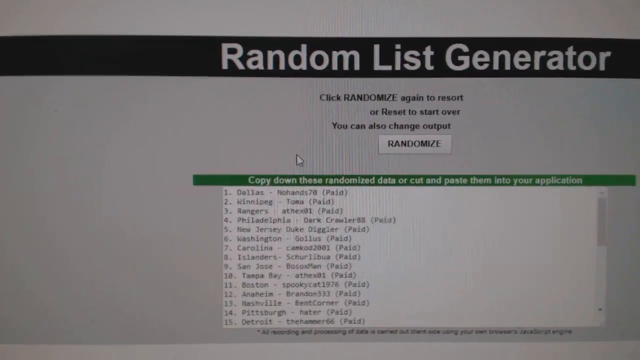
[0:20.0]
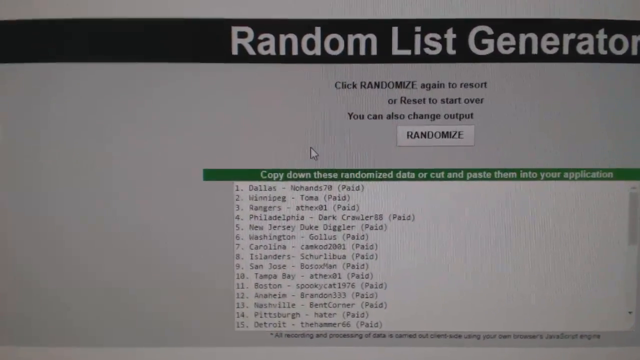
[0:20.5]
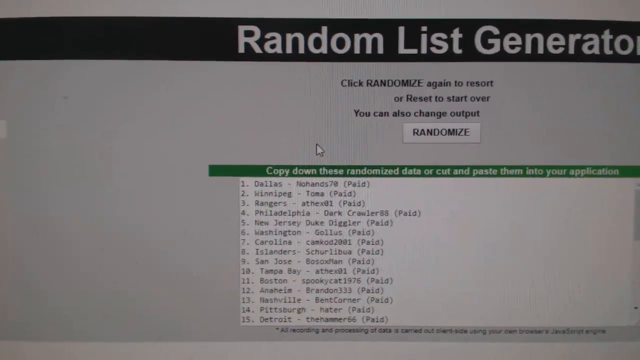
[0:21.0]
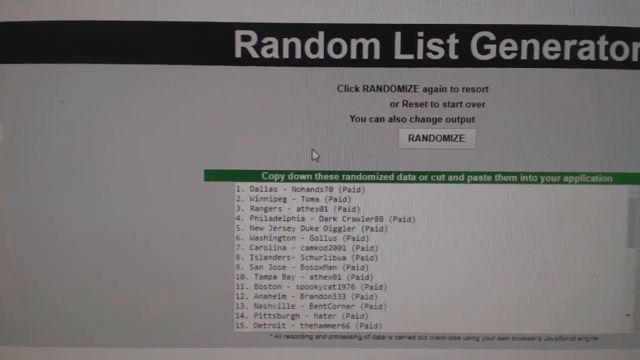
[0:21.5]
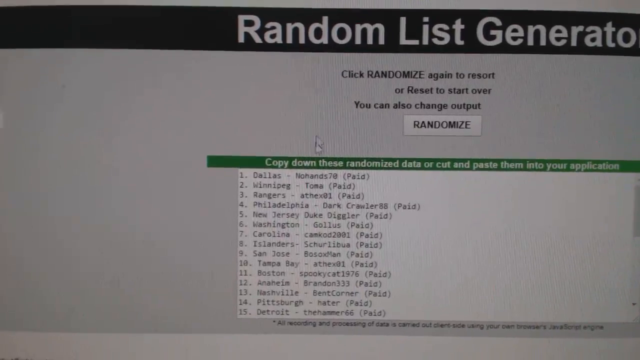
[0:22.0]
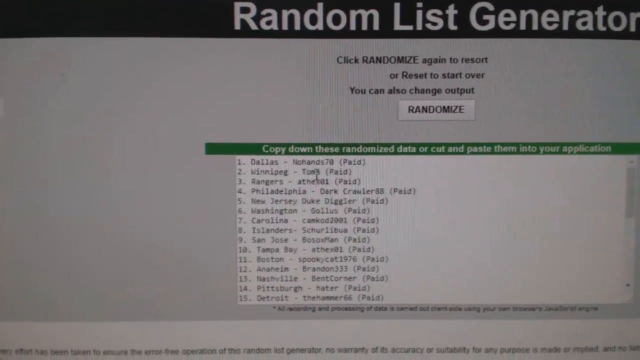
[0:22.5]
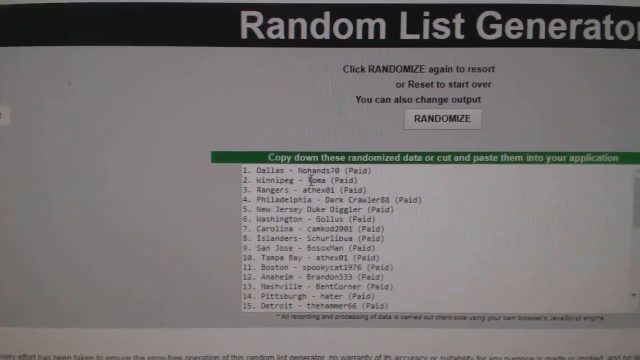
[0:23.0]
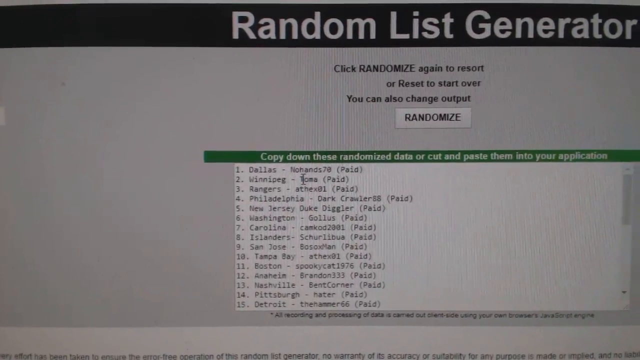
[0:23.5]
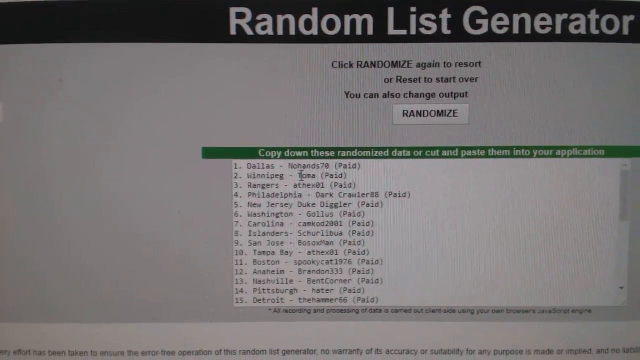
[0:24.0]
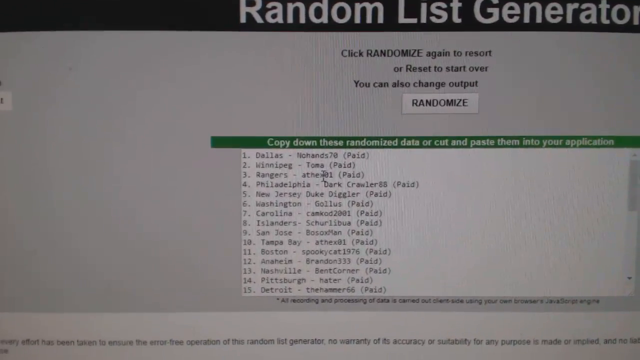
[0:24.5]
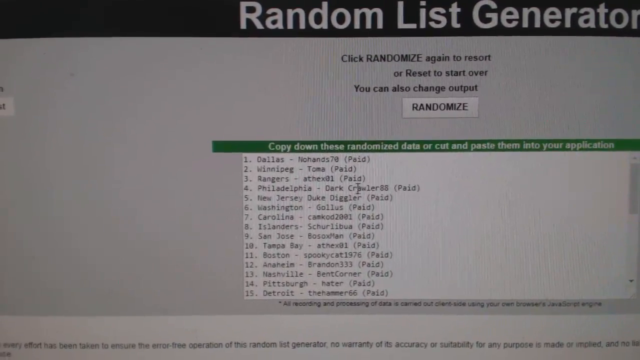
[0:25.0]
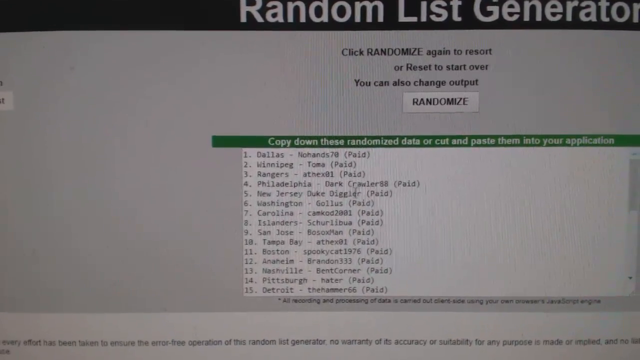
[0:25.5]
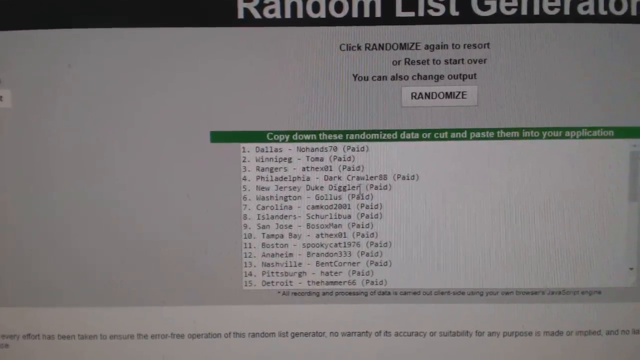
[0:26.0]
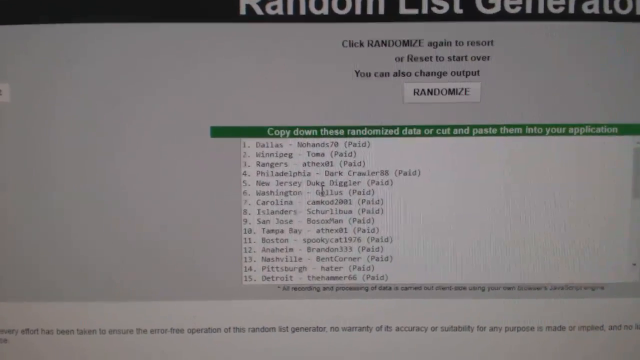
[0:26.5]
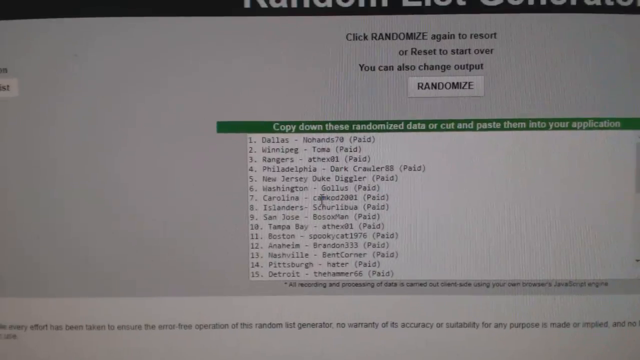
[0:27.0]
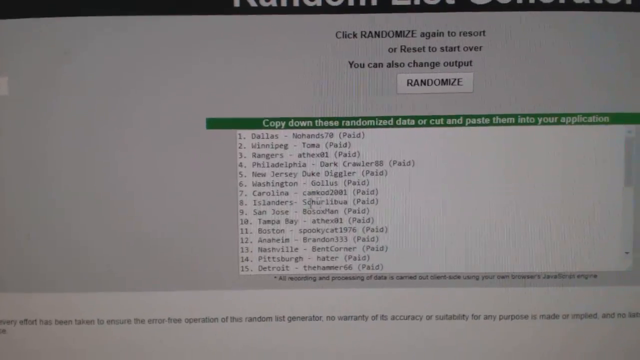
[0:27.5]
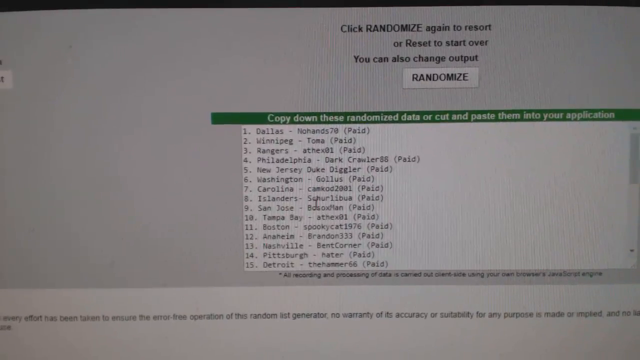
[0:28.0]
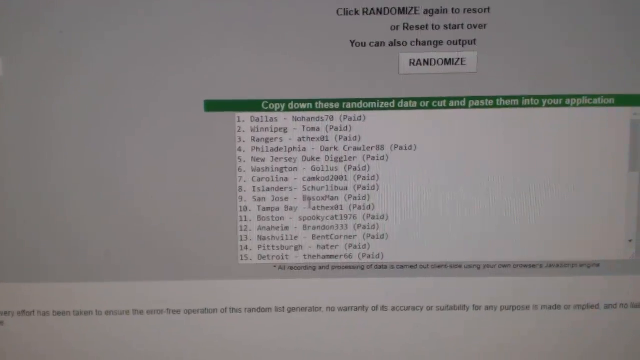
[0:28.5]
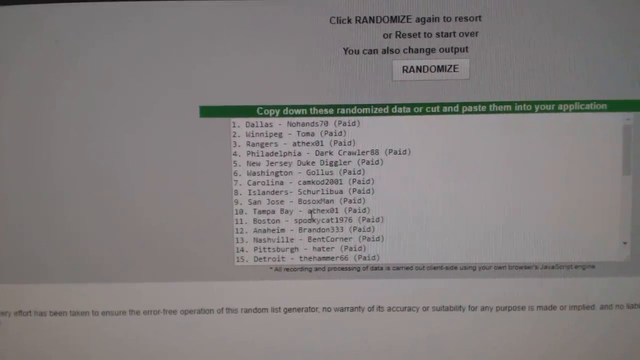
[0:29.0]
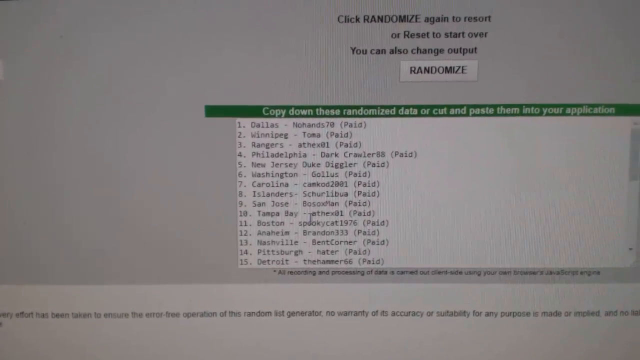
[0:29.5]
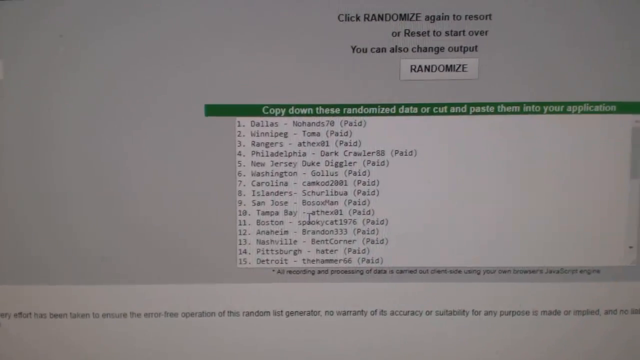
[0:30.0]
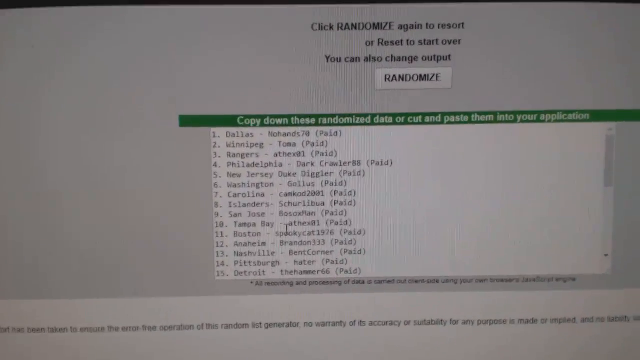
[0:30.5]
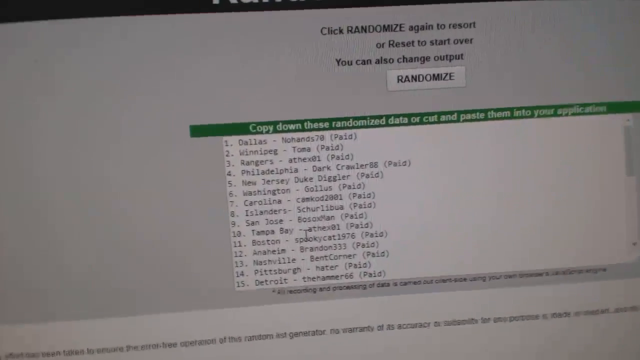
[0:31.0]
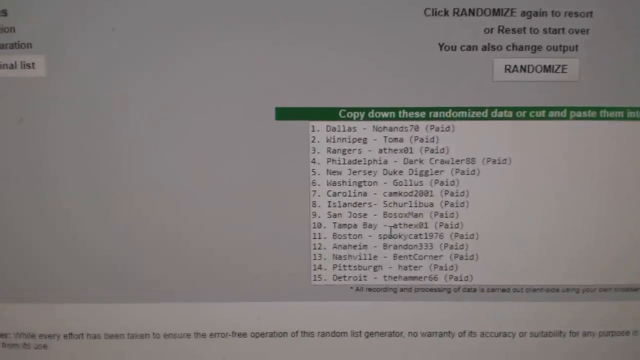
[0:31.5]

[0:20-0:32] The list continues to be shown, with entries such as Dallas, Winnipeg, Rangers, Philadelphia, New Jersey, Duke, Digler, Washington, Carolina, Islanders, San Jose, Tampa Bay, Boston, Anaheim, Nashville, Pittsburgh and Detroit. On the right-hand side of the list are what appear to be usernames, seemingly random words, some followed by a series of numbers, such as "Brandon333", and at the end, in brackets, is the word "paid". It is possibly a log of people who have or have not paid a fee for something.